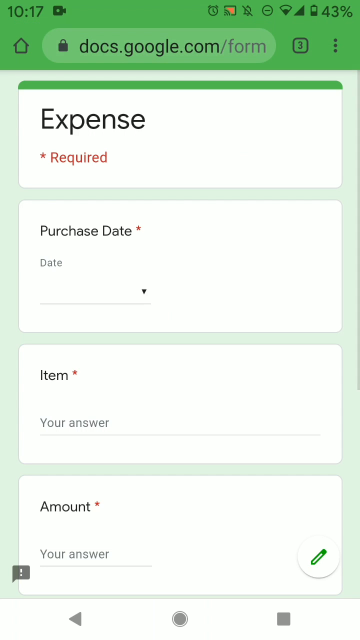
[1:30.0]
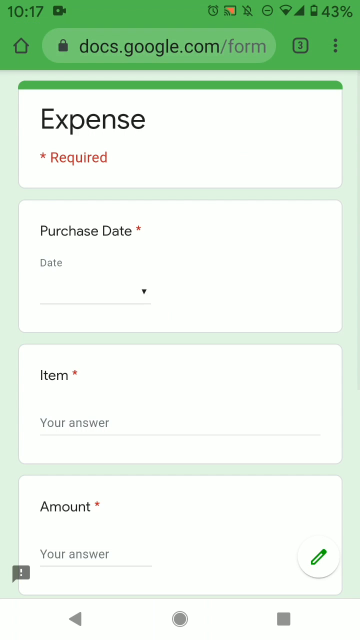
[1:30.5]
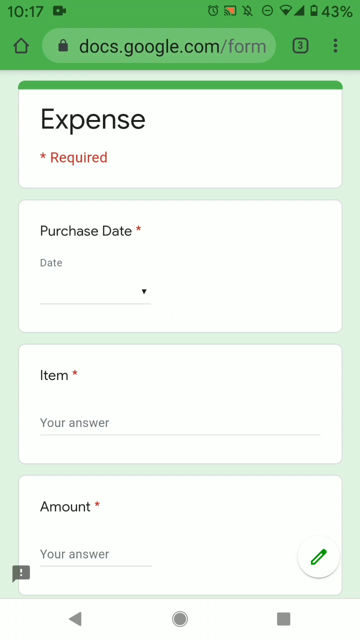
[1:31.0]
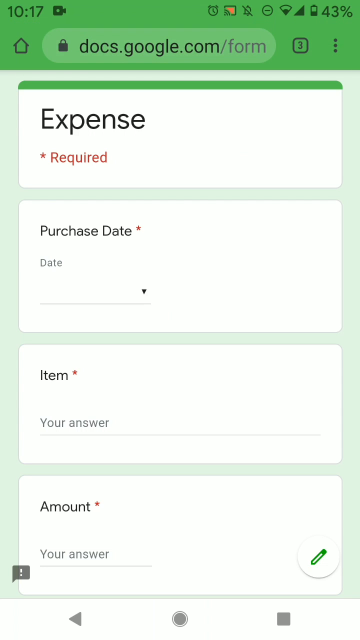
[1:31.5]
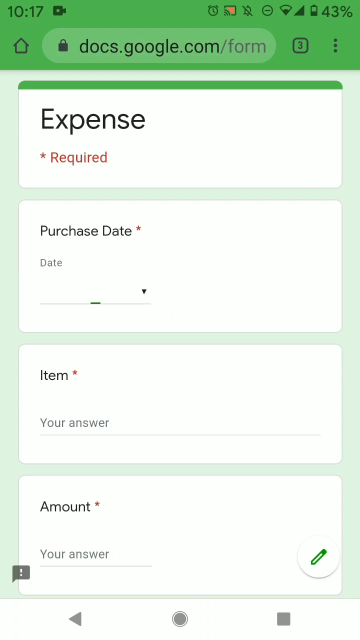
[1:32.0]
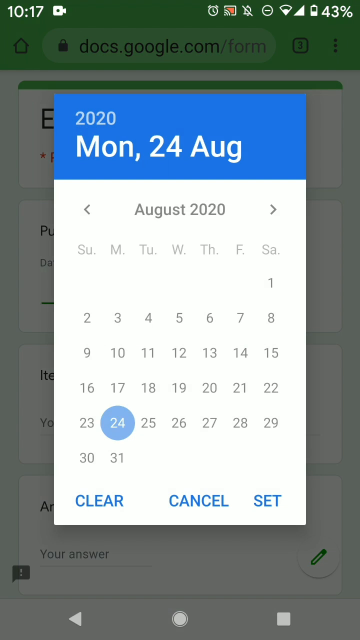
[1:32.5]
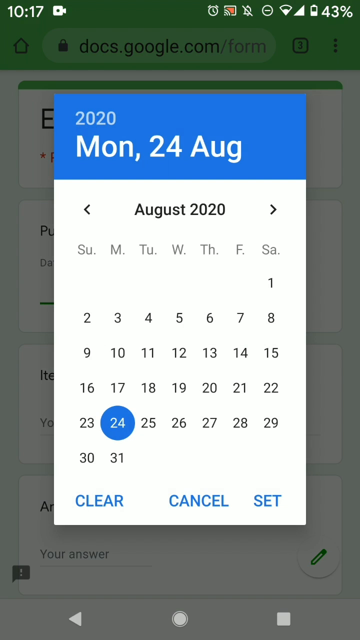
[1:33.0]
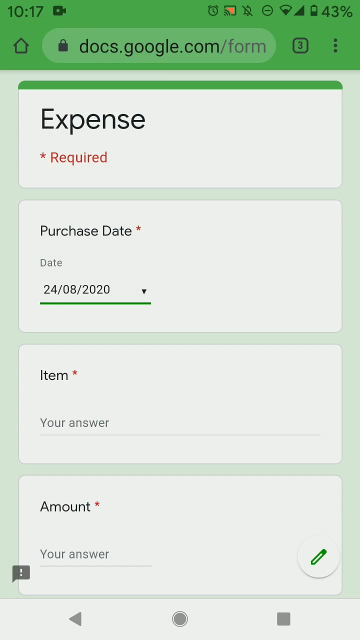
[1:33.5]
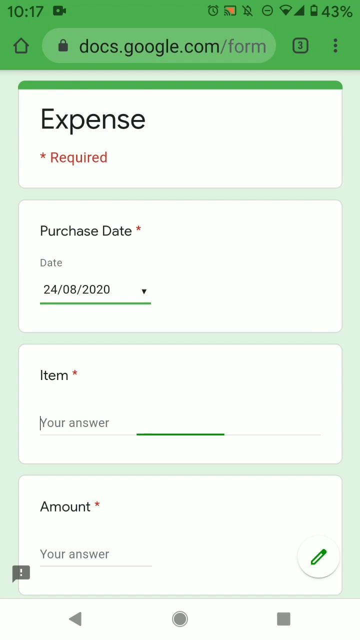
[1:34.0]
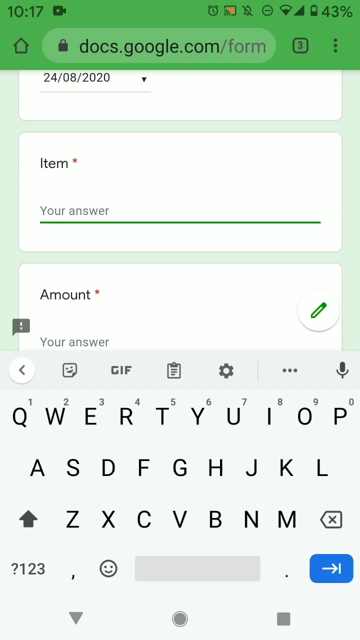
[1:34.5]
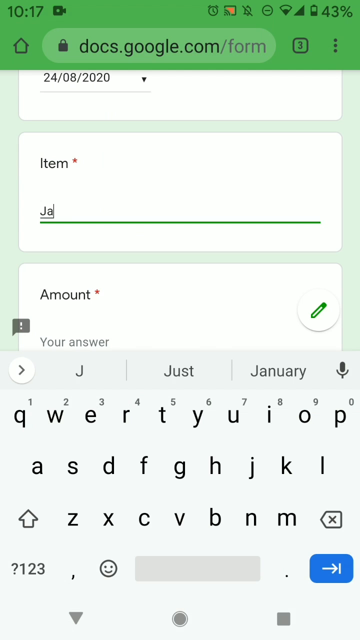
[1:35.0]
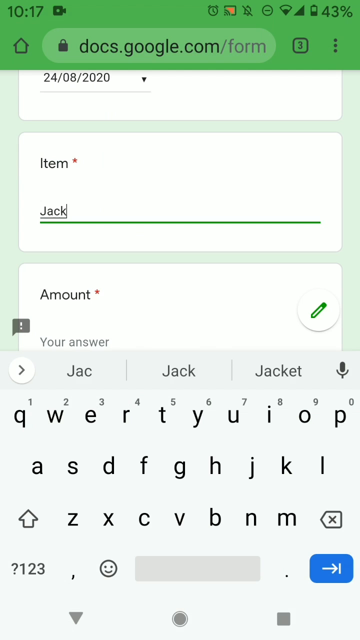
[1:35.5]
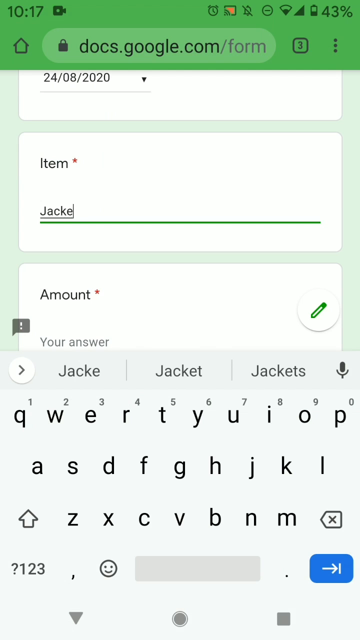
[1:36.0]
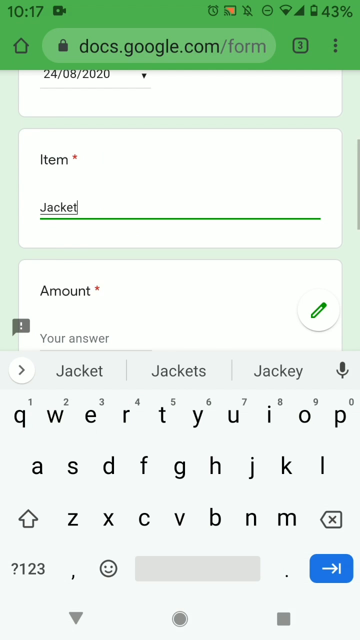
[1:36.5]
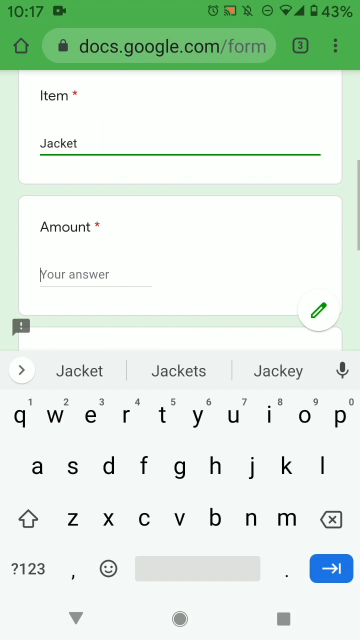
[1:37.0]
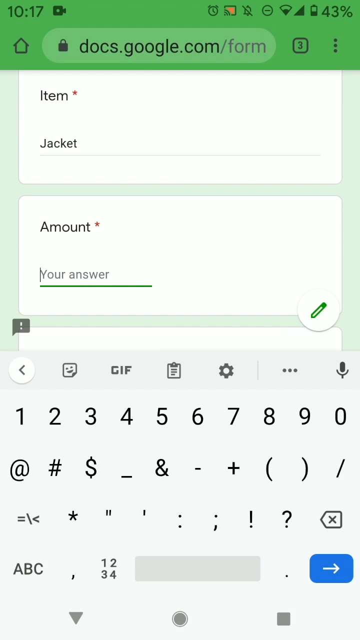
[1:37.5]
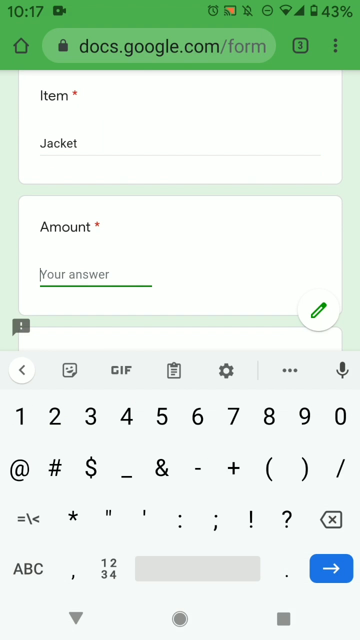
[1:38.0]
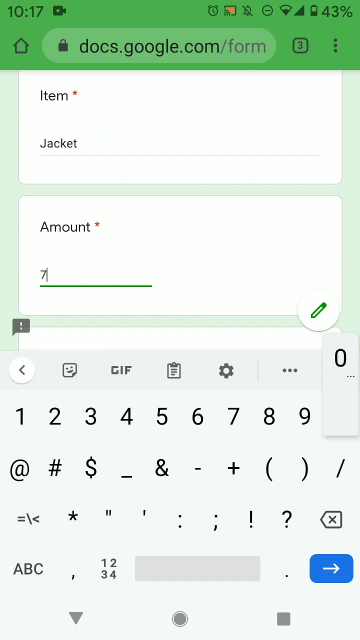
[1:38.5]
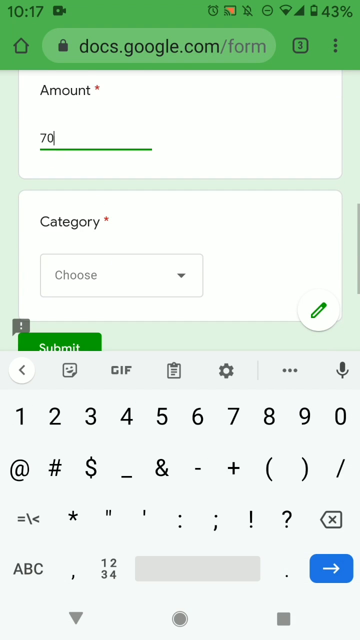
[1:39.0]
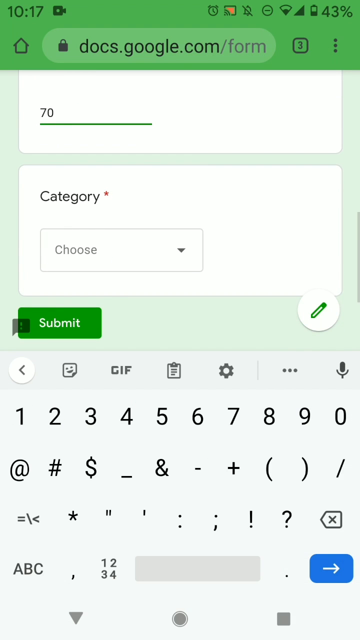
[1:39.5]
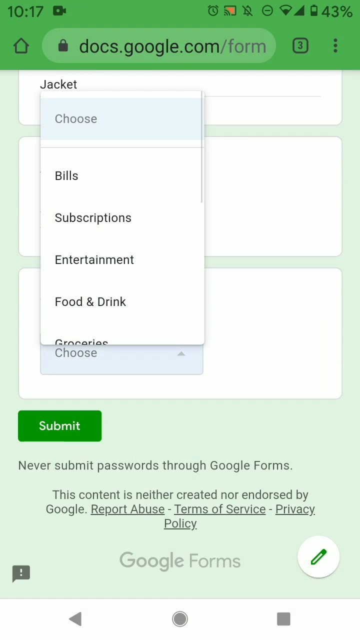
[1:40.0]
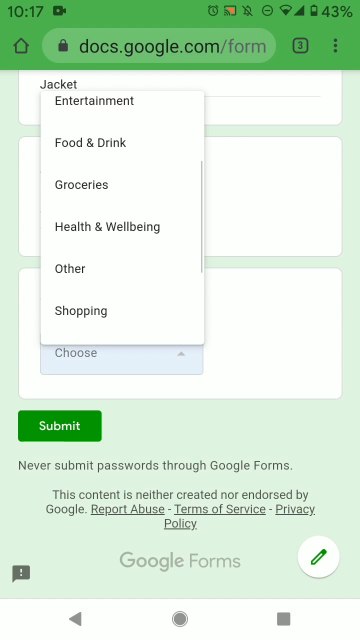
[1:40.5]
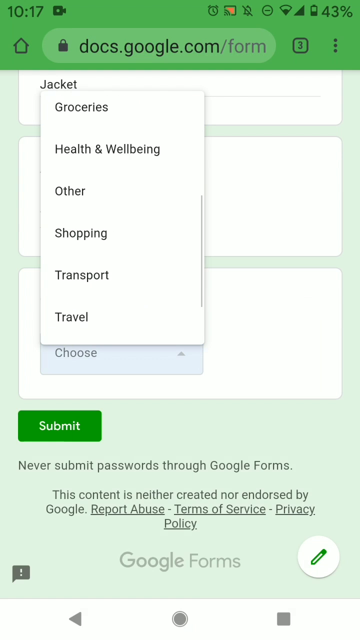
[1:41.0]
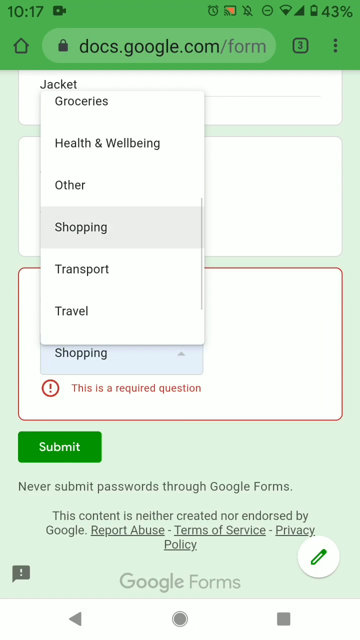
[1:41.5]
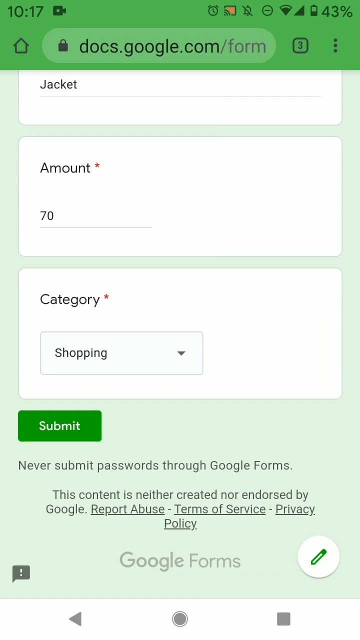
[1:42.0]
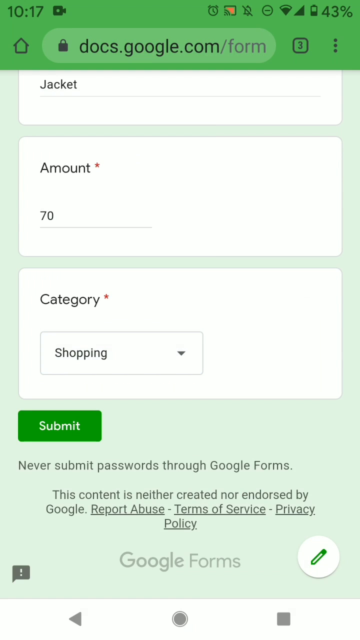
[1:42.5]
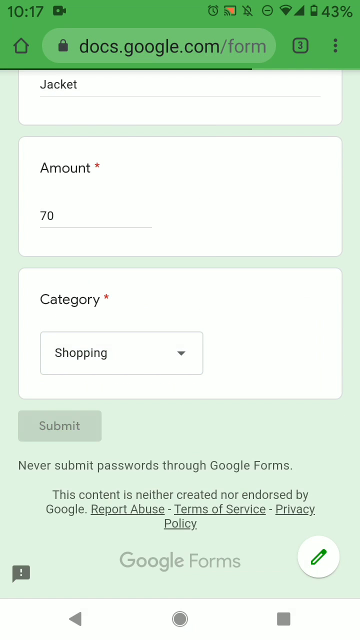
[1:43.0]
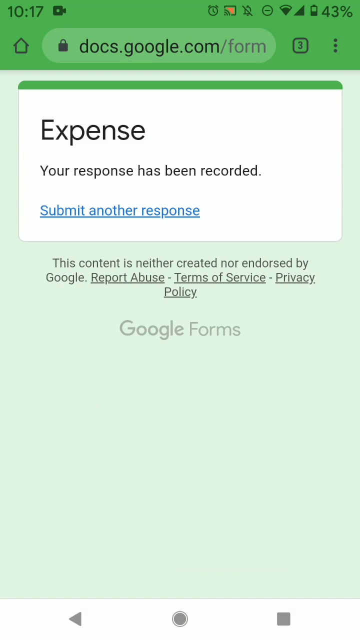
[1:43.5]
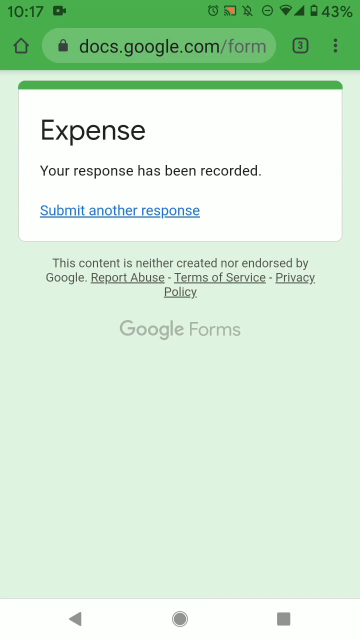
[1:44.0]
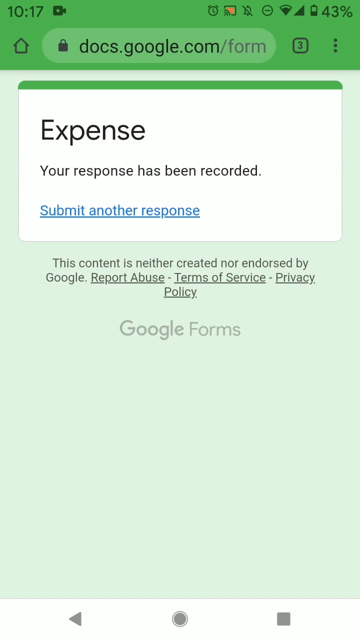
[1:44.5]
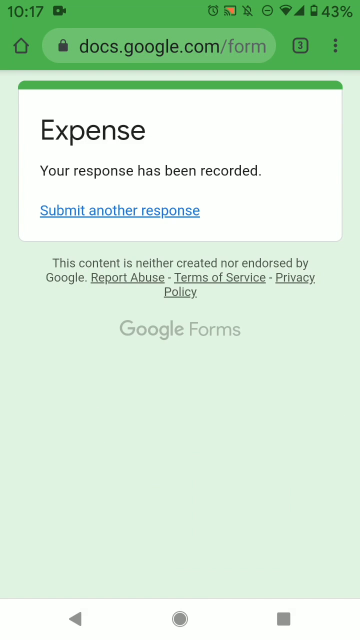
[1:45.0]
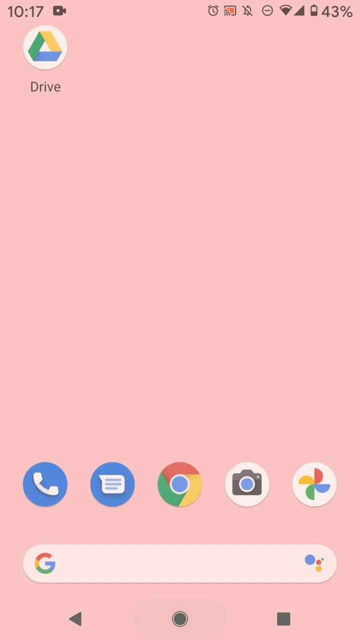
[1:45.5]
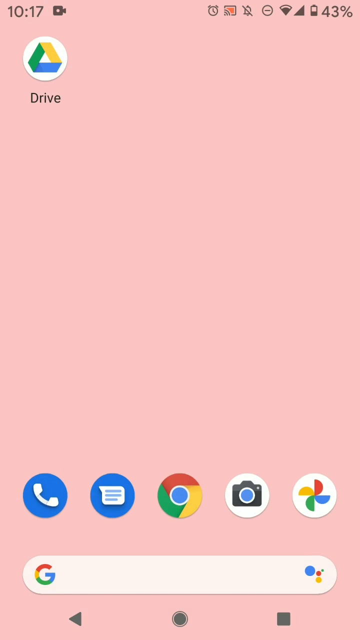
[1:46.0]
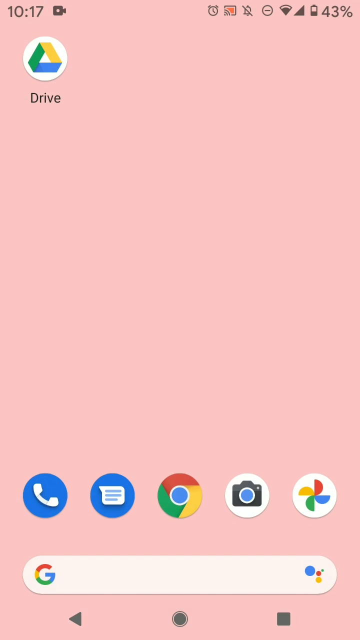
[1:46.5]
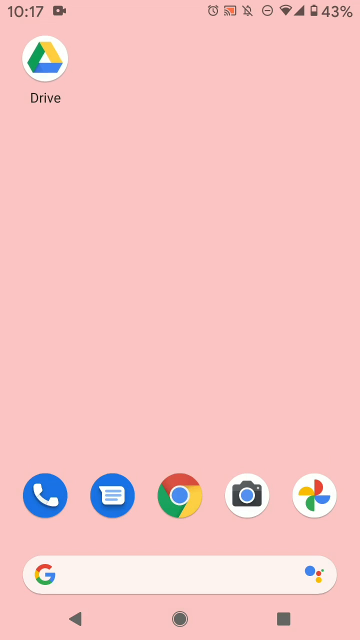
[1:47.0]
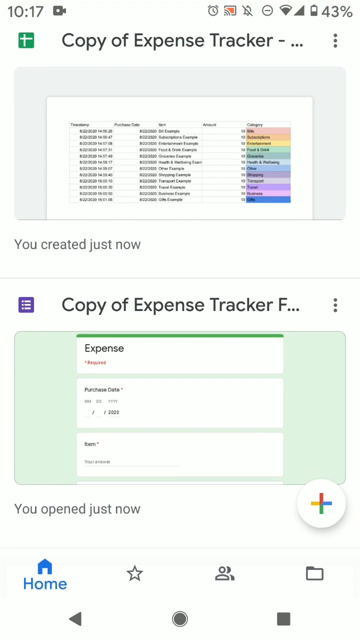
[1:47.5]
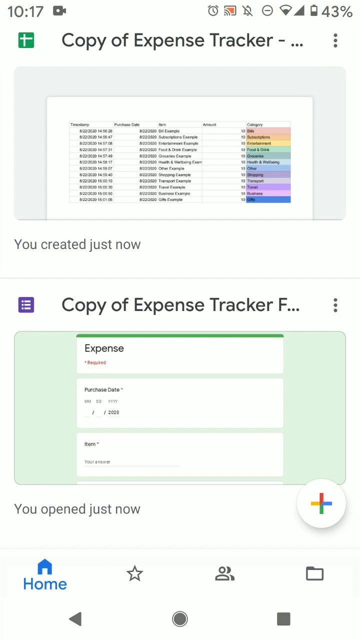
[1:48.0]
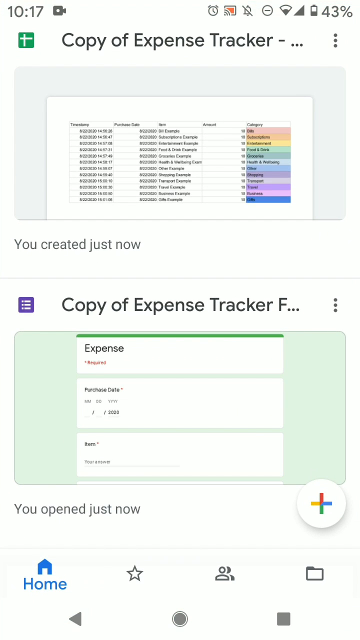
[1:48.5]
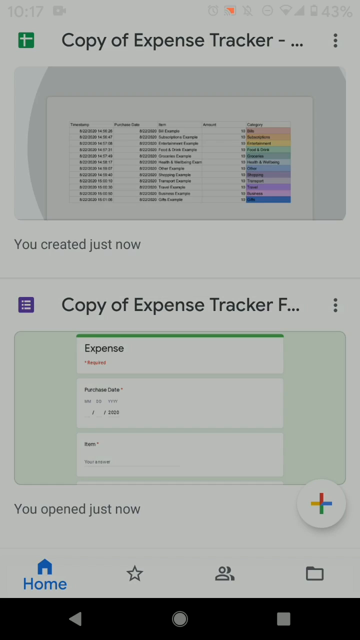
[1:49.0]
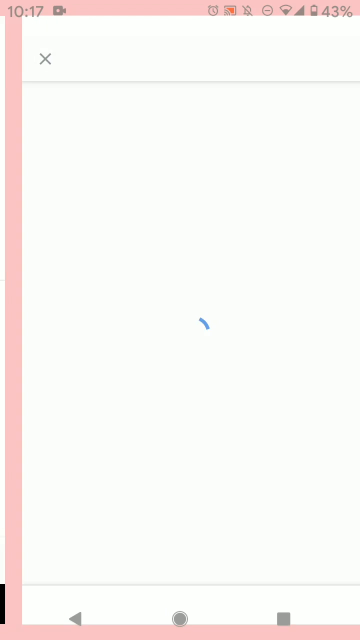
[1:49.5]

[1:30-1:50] The expense form shows a purchase date field and dates, and a dropdown reveals an item field, an amount field and more text. A calendar appears with blue at the top left showing 2020 and a date of Monday, August 25, then "August 2020" with the days Sunday through Saturday and a blue circle over the day 24; "clear", "cancel" and "send" are shown. The item field is clicked and the letters J, A, C, K, E, T are typed, then 70 is typed into the amount field. Scrolling down shows that shopping has been selected, and the submit button is selected; a confirmation that the expense response has been recorded appears, with blue text below. The view then moves away to the phone, where what appears to be some sort of expense tracker is shown. The Google form with multiple categories has been submitted, and text notes that the content is not endorsed by Google.